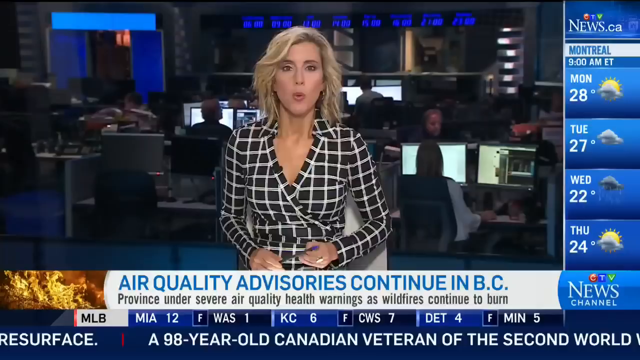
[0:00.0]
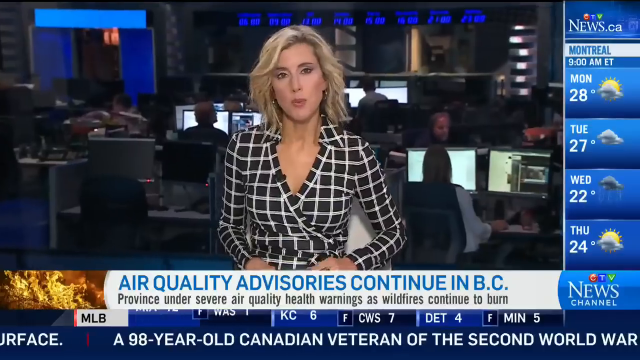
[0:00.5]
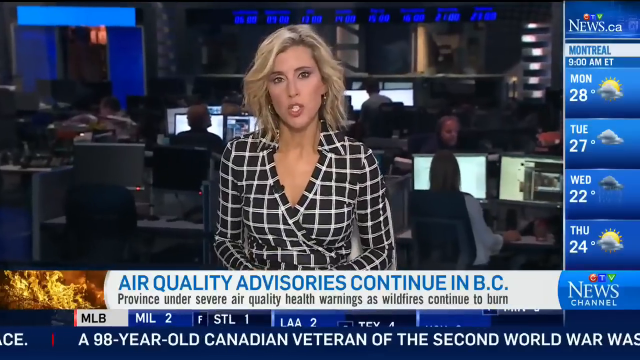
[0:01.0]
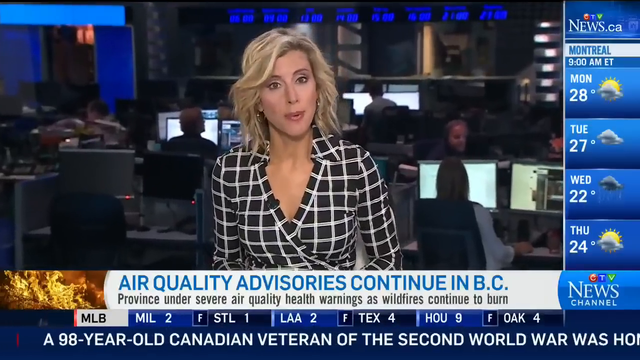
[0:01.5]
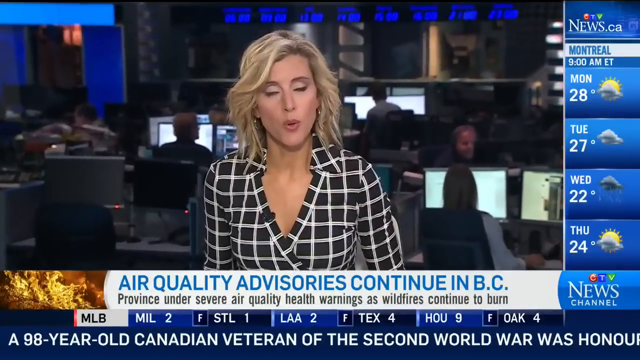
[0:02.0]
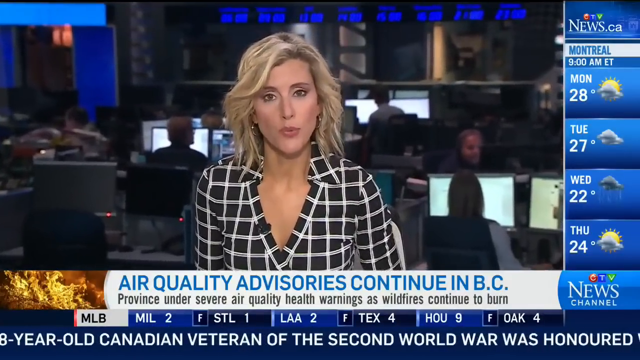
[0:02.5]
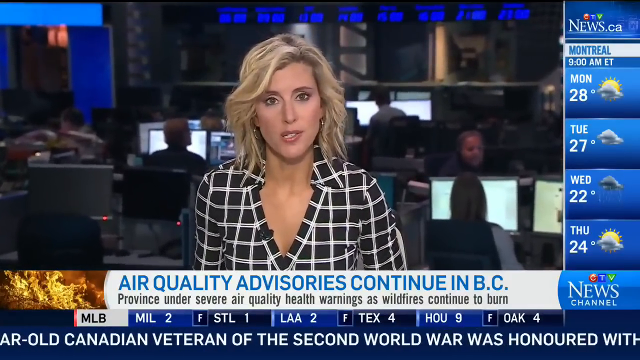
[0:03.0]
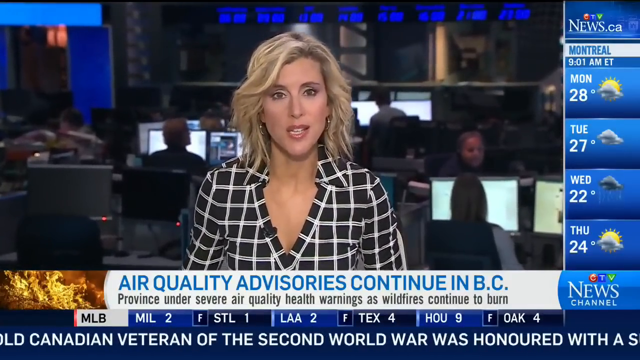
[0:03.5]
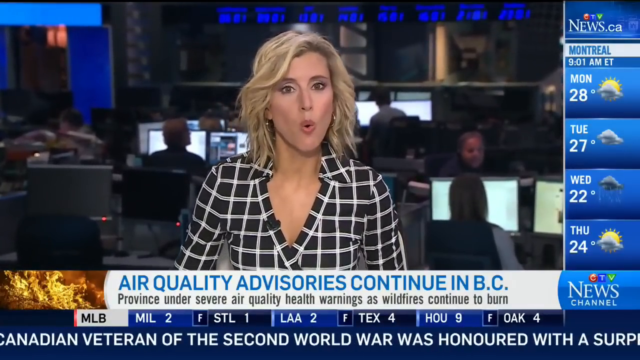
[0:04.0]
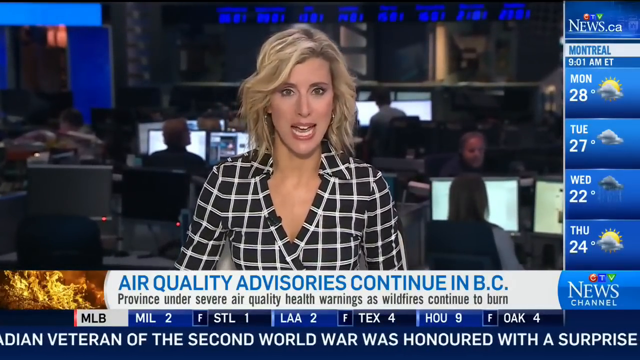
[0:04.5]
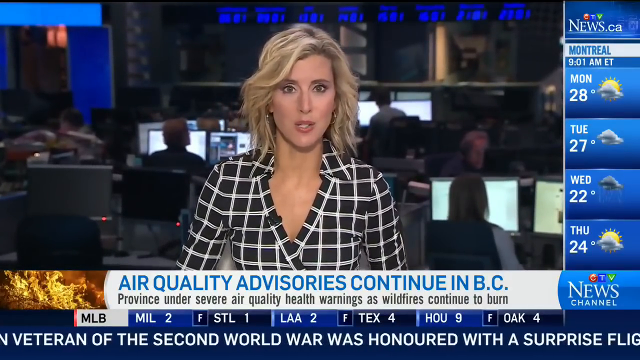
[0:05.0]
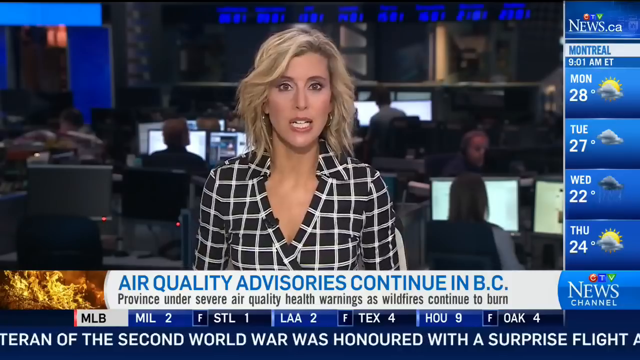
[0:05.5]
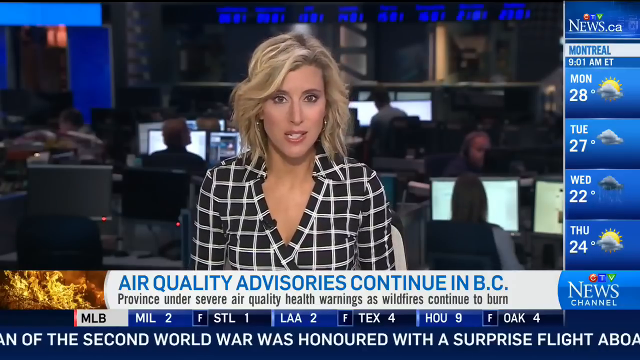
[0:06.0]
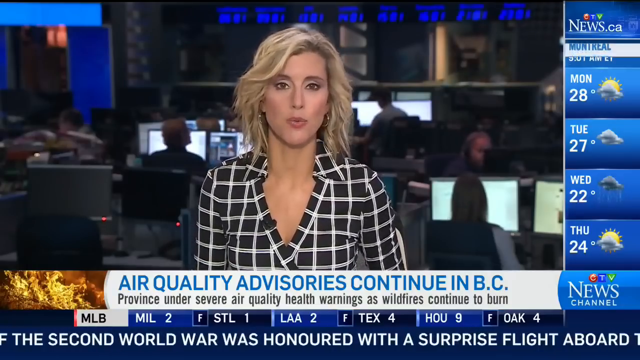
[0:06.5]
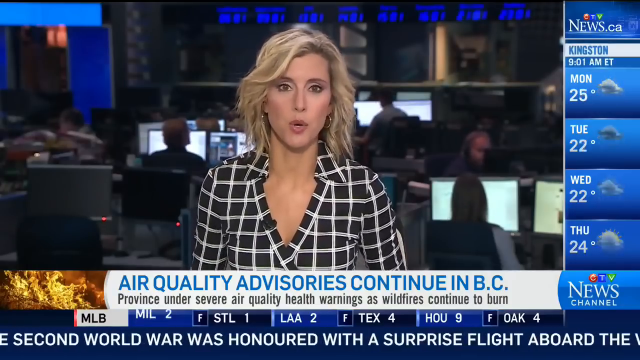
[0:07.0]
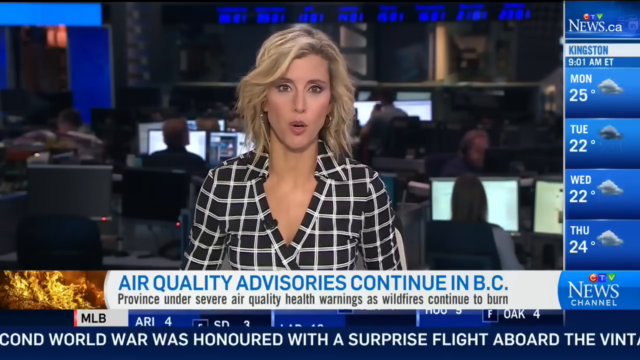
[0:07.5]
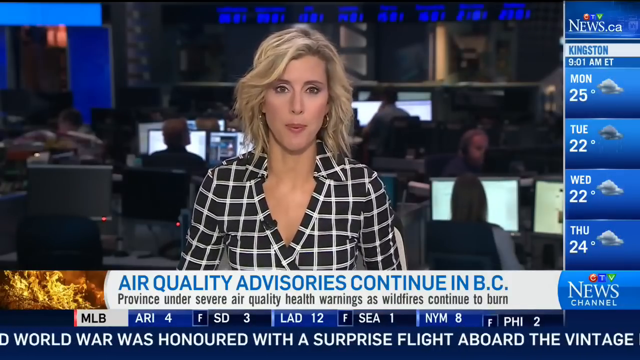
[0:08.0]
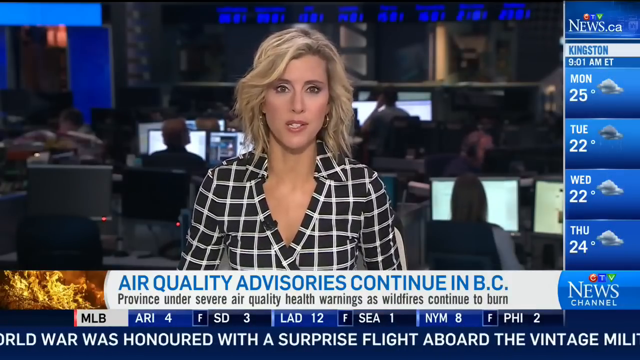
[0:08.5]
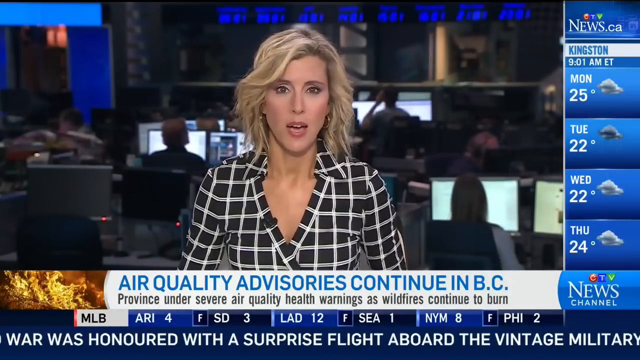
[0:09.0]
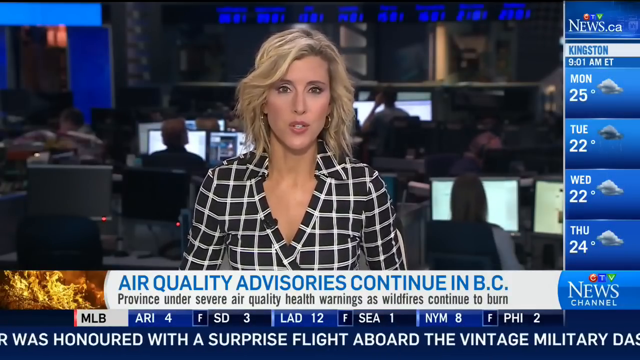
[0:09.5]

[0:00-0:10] A blonde female news presenter sits in a white chair, wearing a black dress with a white grid design and holding a blue pencil. Behind her are people inside the news station, probably working on something, since their computers are open. The news channel is ctvnews.ca. On the right side is the weather for Montreal: Monday 28 degrees, Tuesday 27 degrees, Wednesday 22 degrees and Thursday 24 degrees. The headline reads "Air quality advisories continues in BC, province under severe air quality health warnings as wildfire continues to burn."